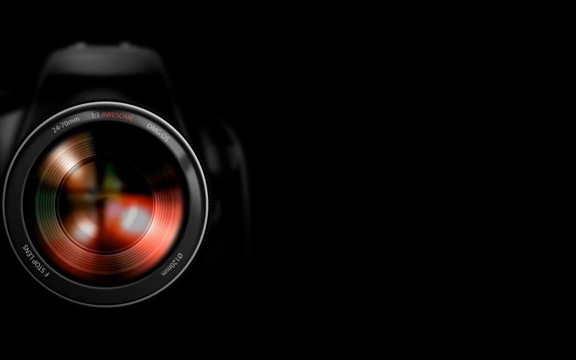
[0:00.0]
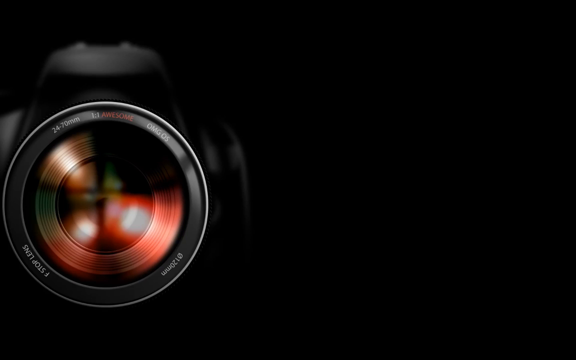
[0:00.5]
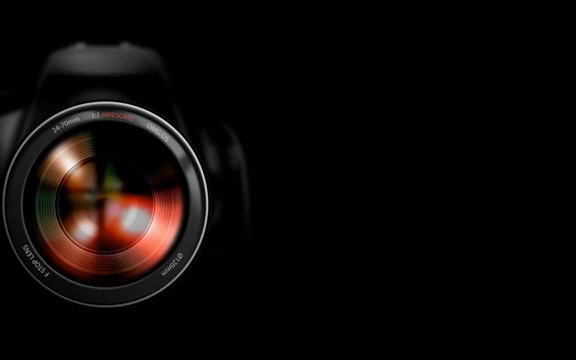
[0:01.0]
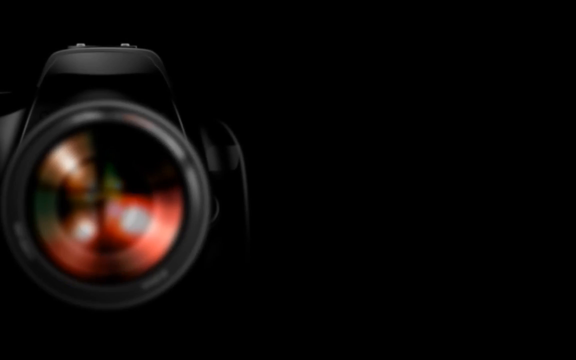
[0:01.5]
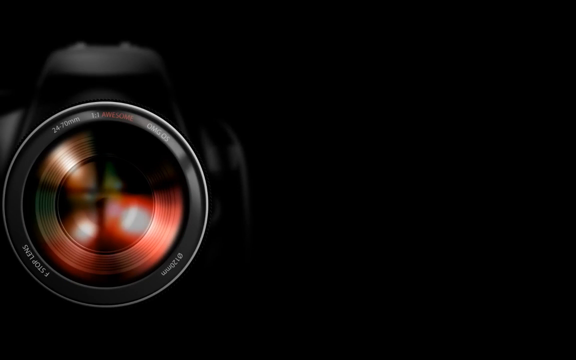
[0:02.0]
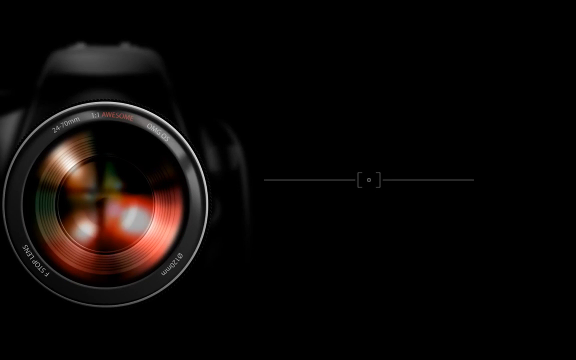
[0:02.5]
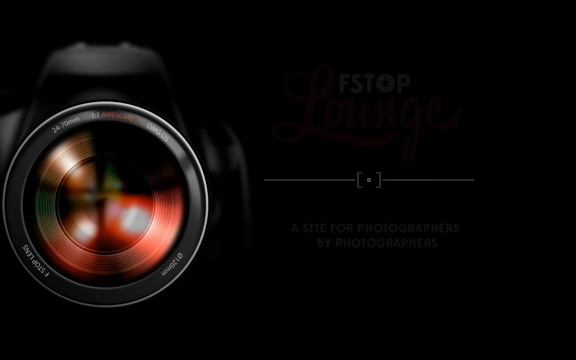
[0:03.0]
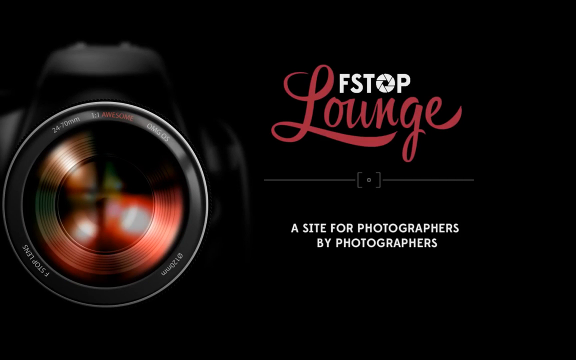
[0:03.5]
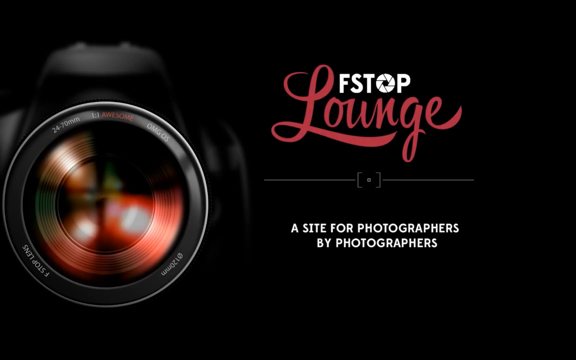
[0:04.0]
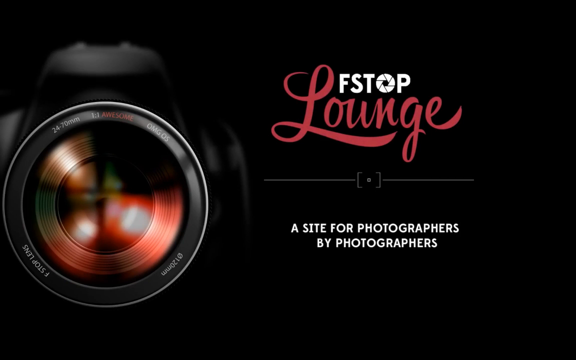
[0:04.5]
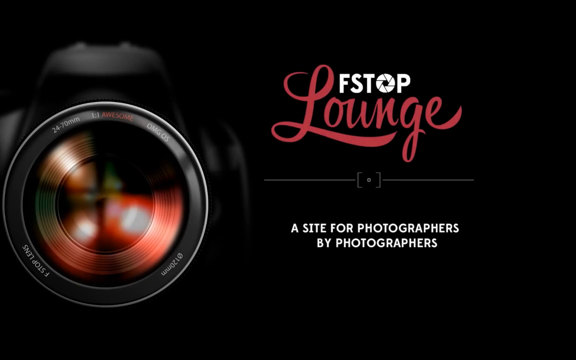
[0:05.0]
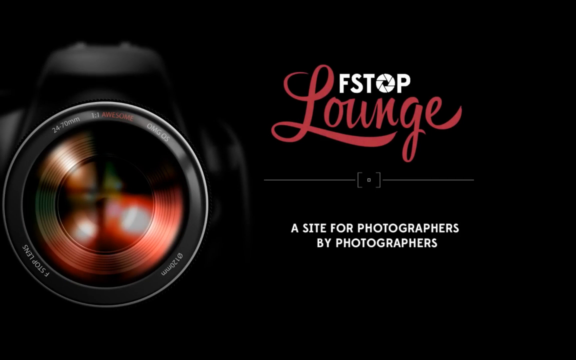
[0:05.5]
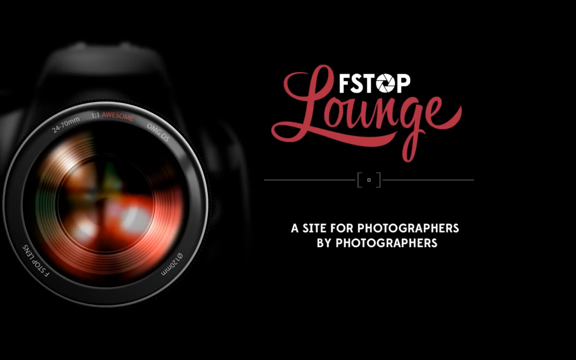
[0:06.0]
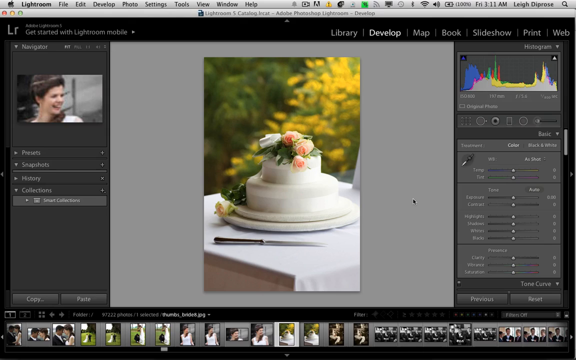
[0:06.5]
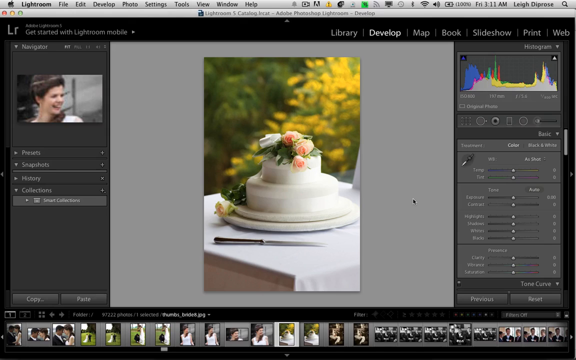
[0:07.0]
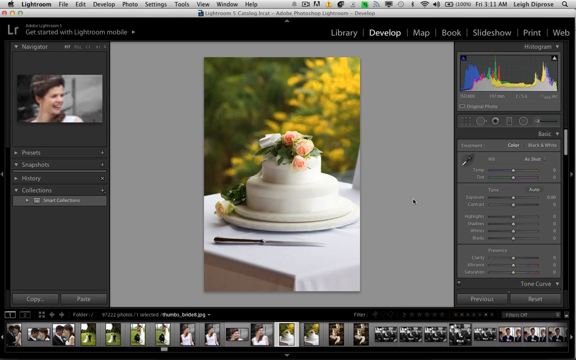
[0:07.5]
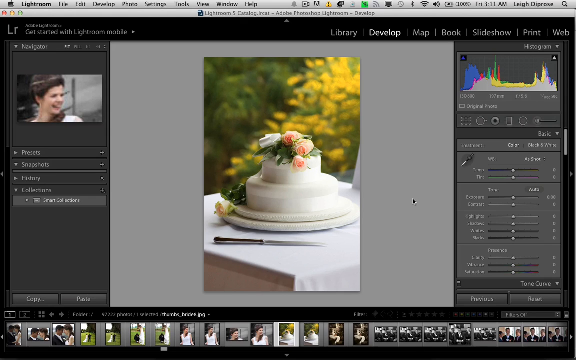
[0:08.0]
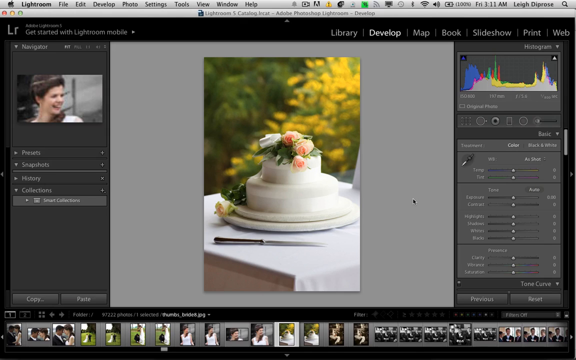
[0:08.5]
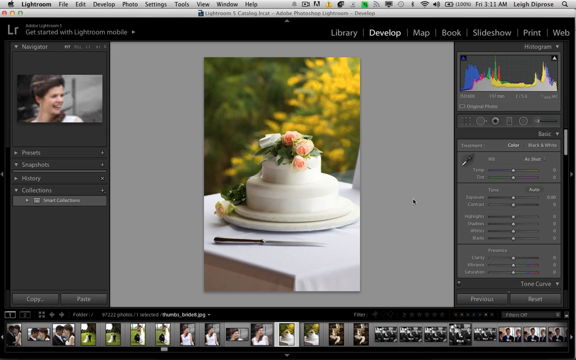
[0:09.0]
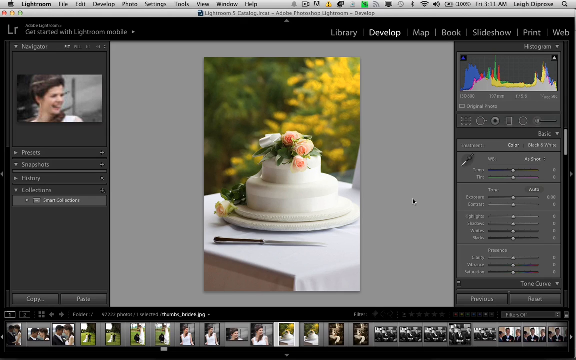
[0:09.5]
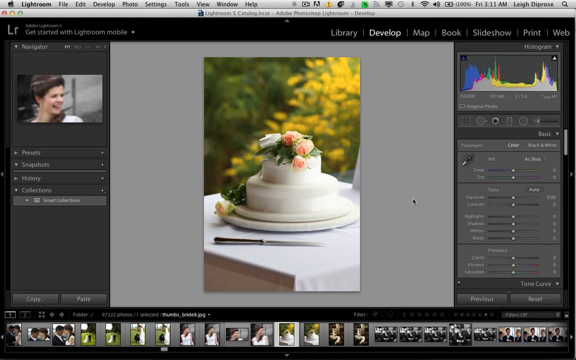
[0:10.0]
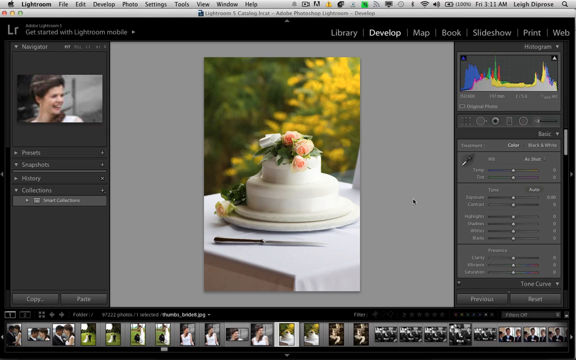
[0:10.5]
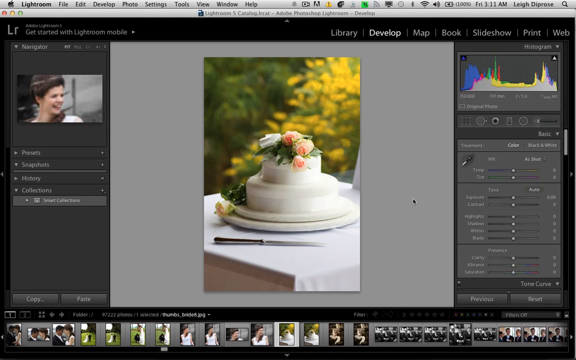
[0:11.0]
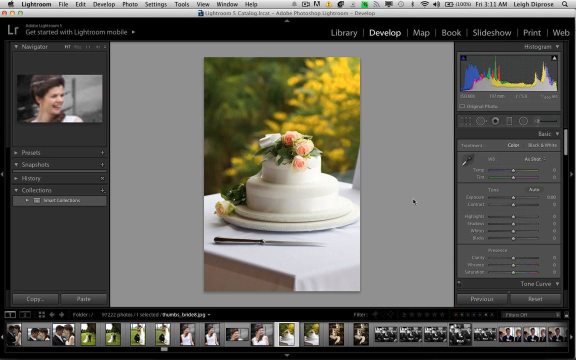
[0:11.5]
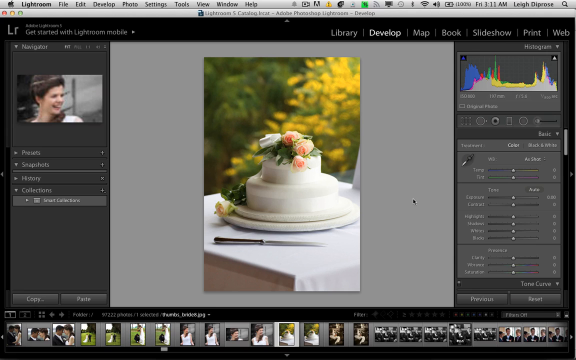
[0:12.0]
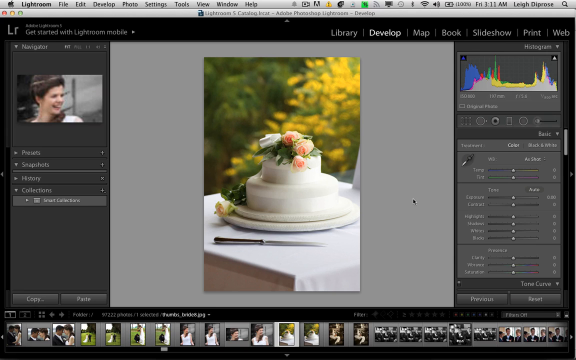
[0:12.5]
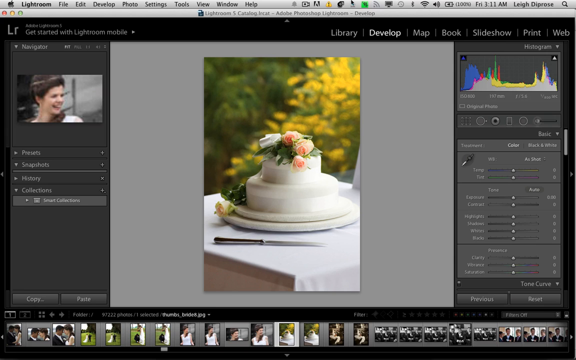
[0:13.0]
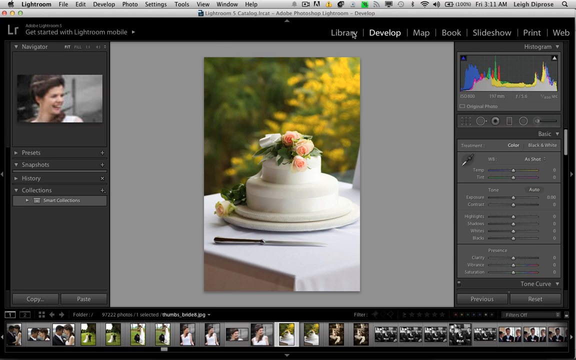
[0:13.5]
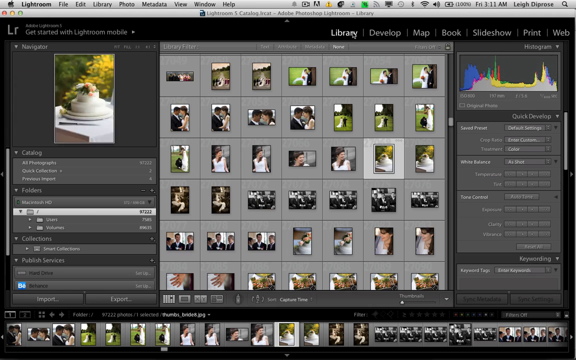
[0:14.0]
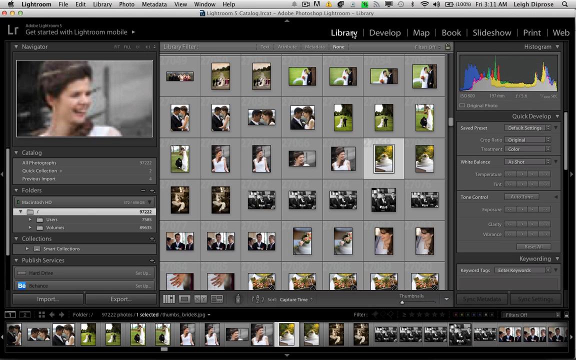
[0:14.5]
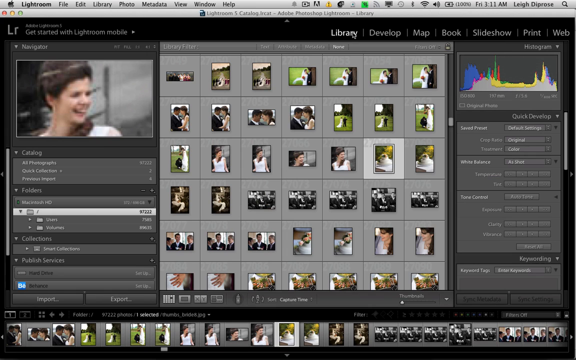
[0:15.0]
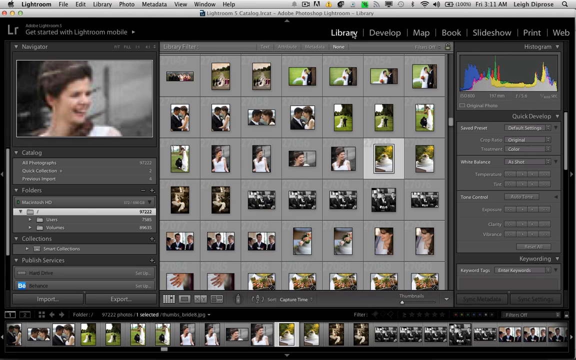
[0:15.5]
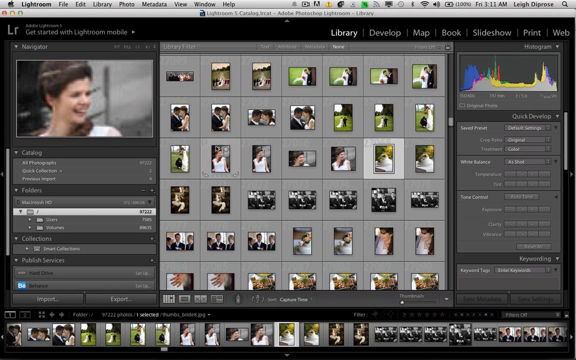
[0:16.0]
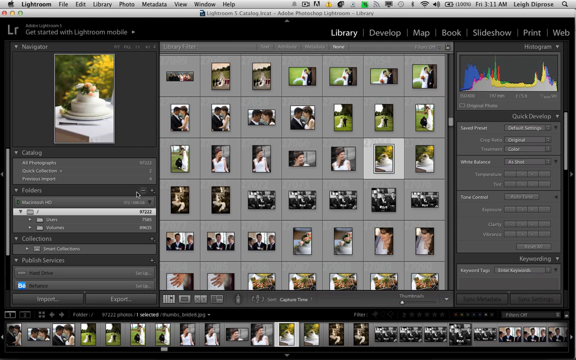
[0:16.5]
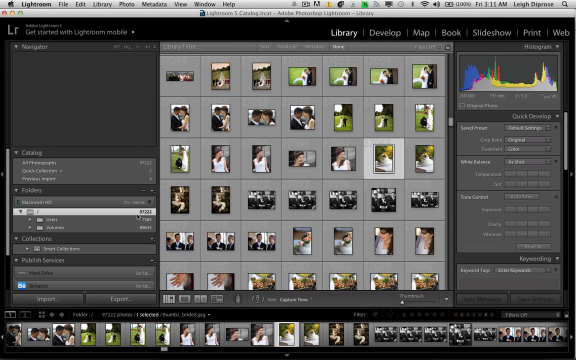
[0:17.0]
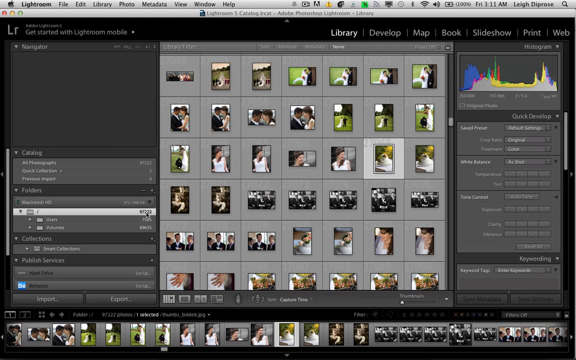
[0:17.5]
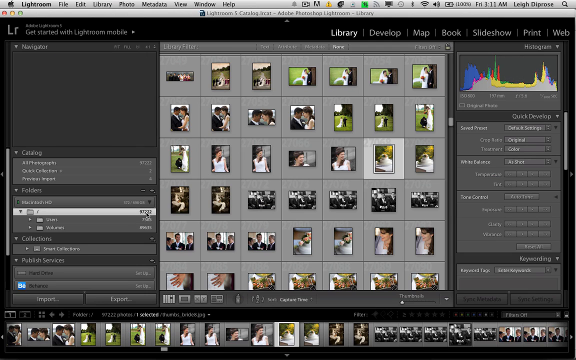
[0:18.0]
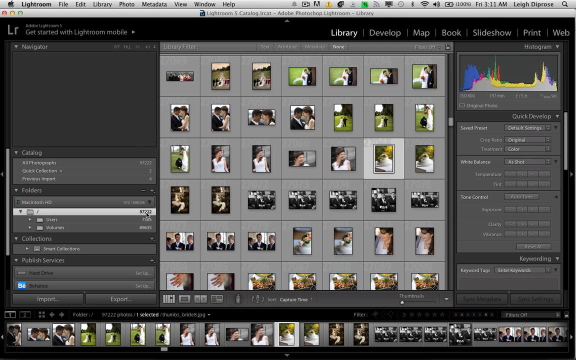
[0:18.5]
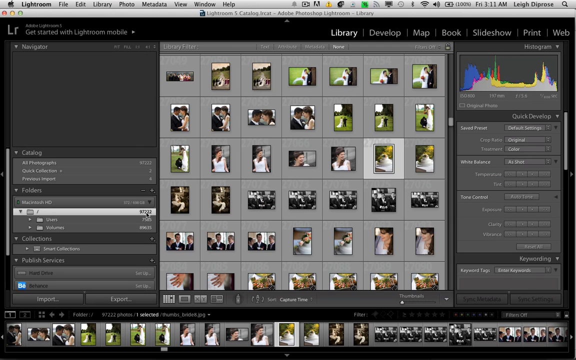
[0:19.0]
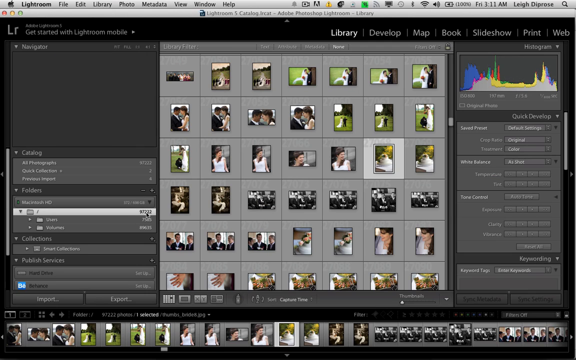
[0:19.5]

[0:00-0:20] The video shows a camera. A desktop then appears with a cake and some pictures of people, and a cursor moves across the desktop. The pictures, which include a wedding picture and a picture of a cake, seem to have been taken with the camera, apparently by a woman at her wedding, and she appears to be checking them on her desktop; the video seems to be advertising the camera.